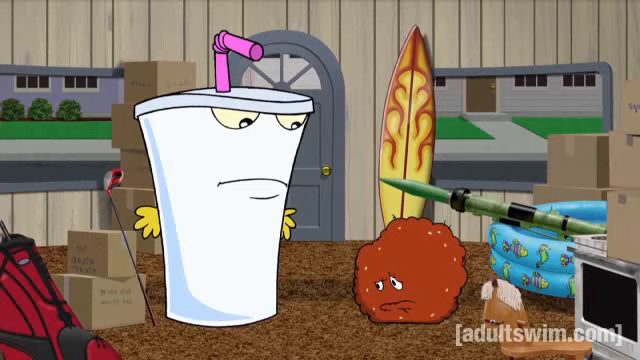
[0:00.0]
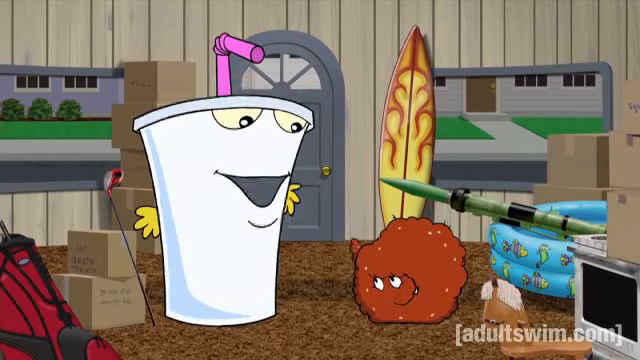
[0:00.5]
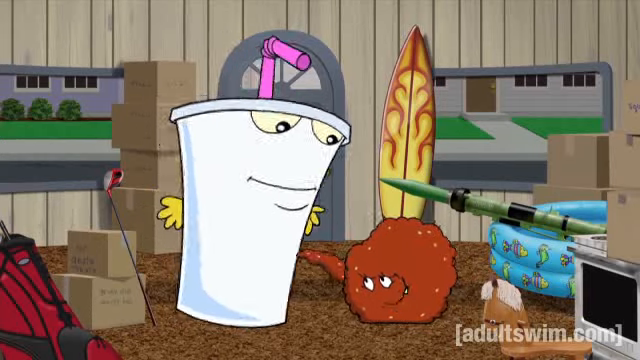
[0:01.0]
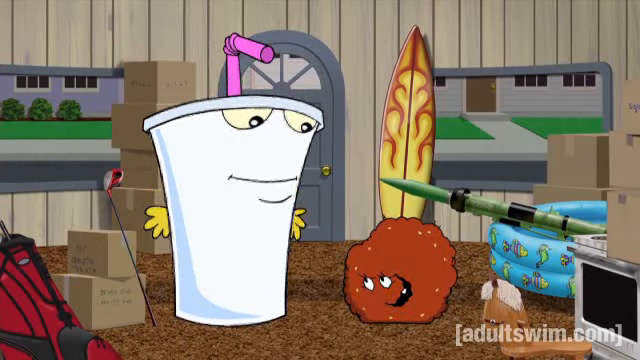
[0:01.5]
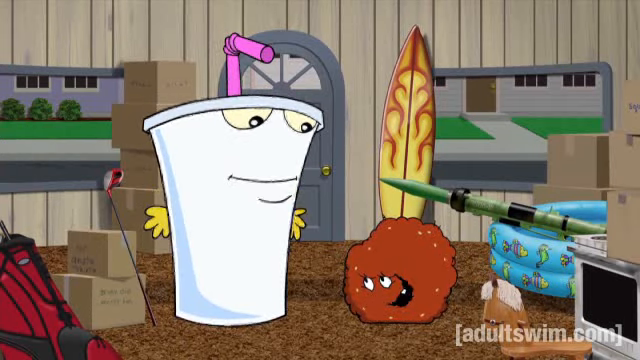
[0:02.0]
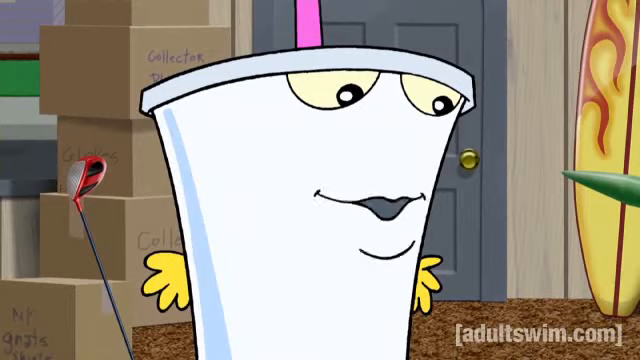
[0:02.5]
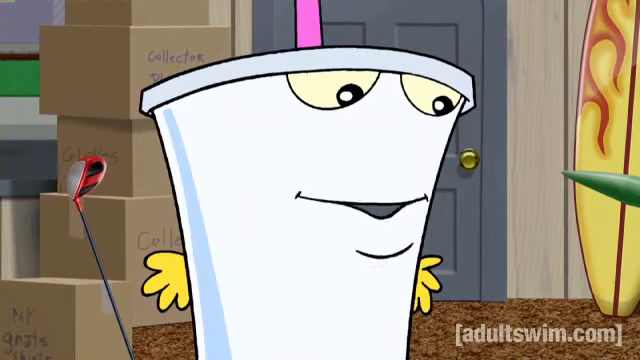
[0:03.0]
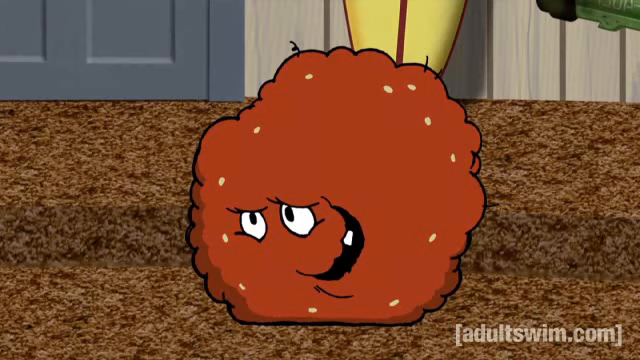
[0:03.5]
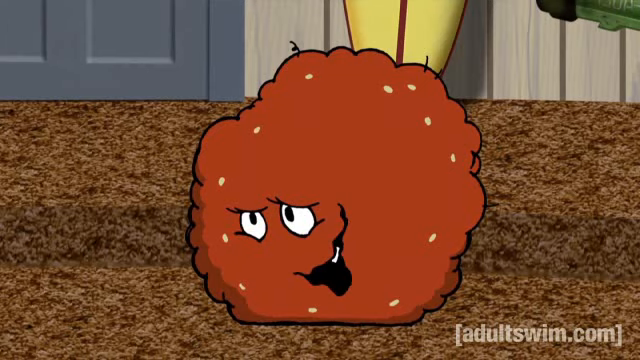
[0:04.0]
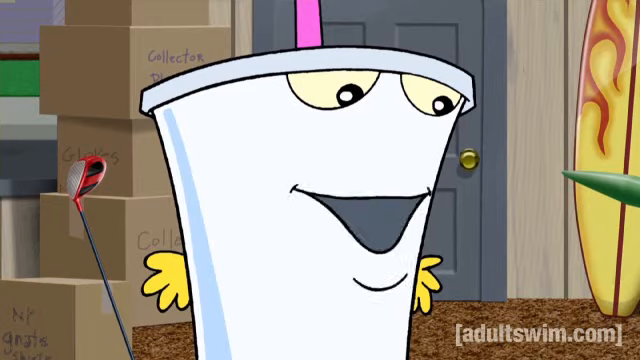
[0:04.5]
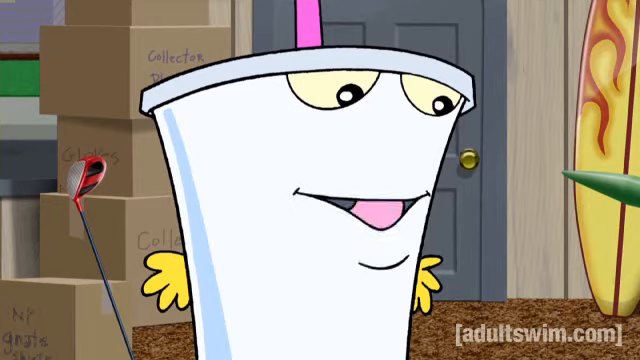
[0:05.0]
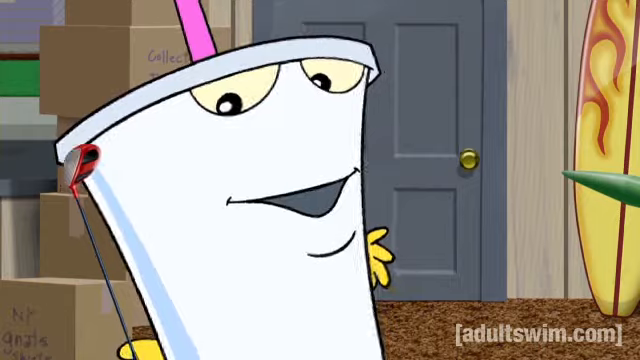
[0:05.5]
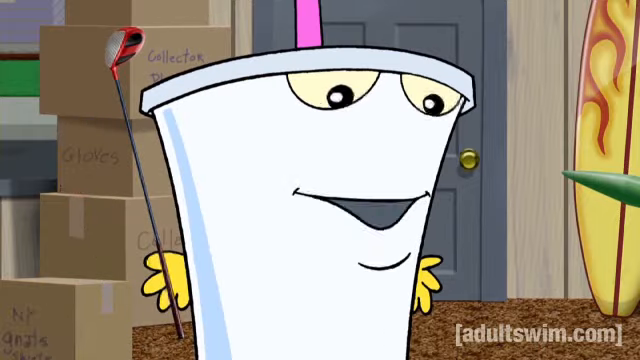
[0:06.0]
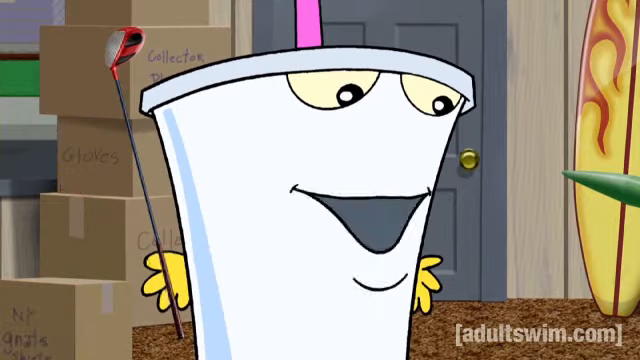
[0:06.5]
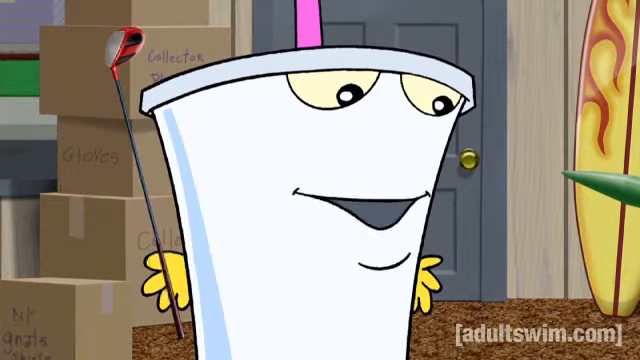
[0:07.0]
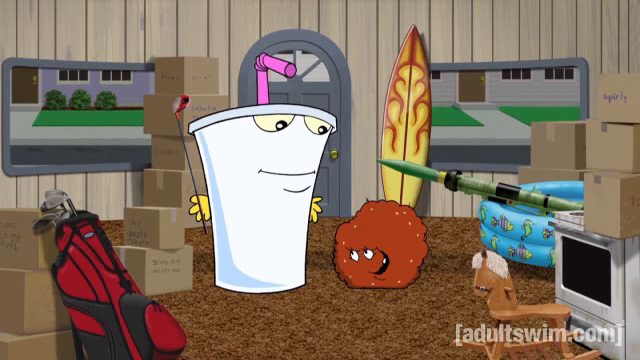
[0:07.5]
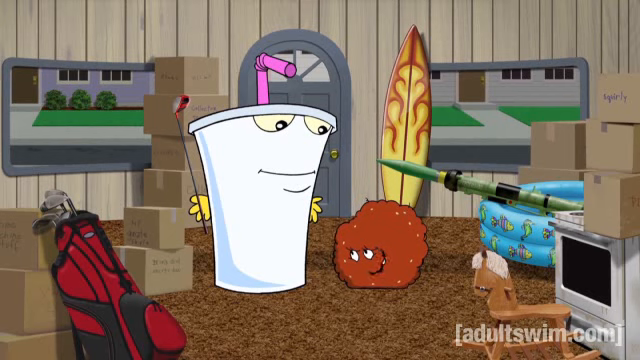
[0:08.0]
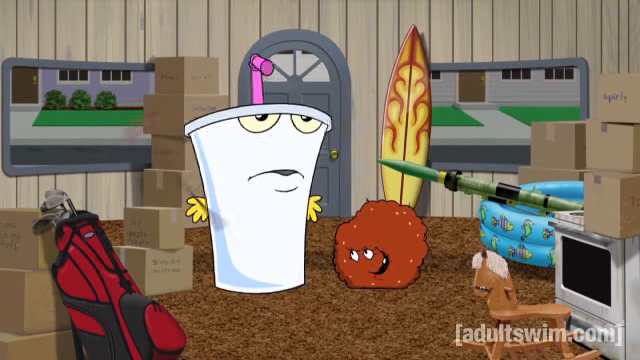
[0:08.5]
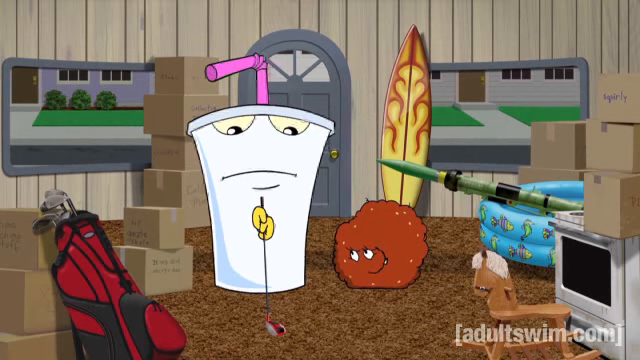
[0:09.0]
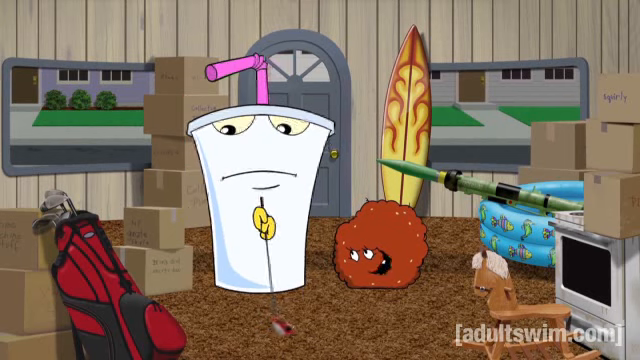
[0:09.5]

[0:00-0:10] Master Shake and Meatwad start the scene by high-fiving. They are in a house that doesn't look like their own; the door is wrong, there is a surfboard in the back, and there are tons of moving boxes. There also seems to be a grenade launcher and a kiddie pool by the door, and a set of golf clubs next to Shake's hand. After high-fiving Meatwad, Shake picks up one of the driving clubs and hits a golf ball to the other side of the room. Wood paneling runs along the entire wall, and grey buildings are in the background, so it looks like they have moved houses to a different neighborhood.